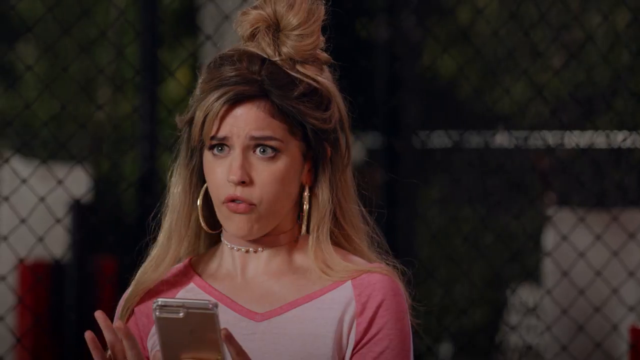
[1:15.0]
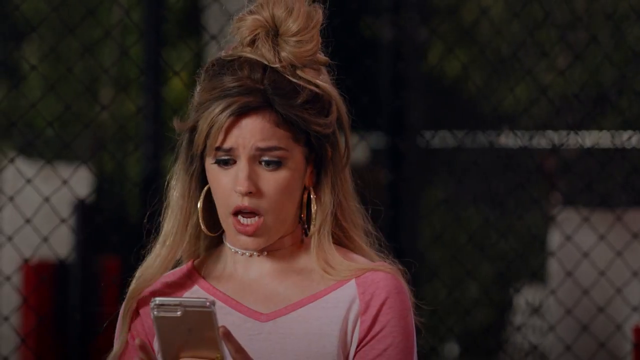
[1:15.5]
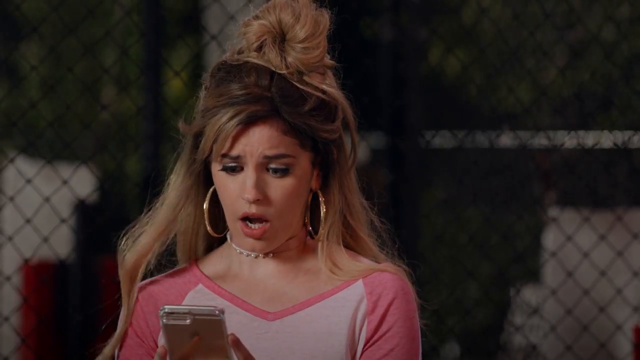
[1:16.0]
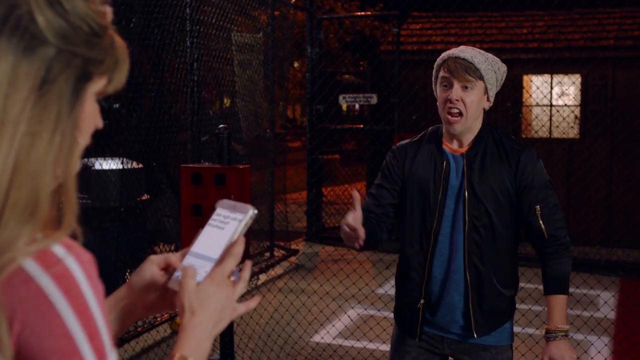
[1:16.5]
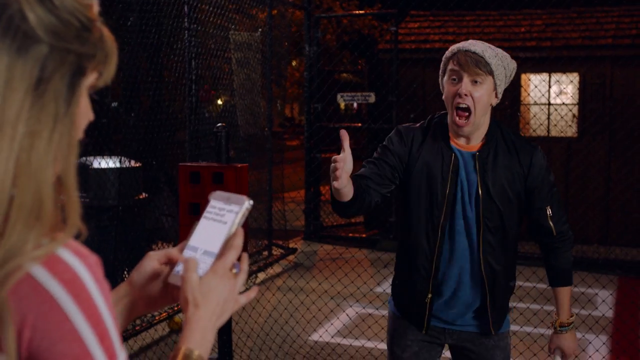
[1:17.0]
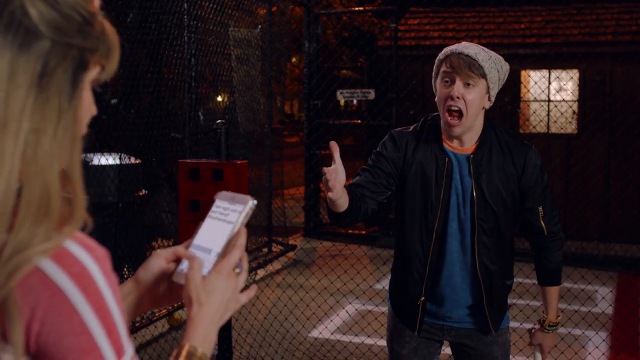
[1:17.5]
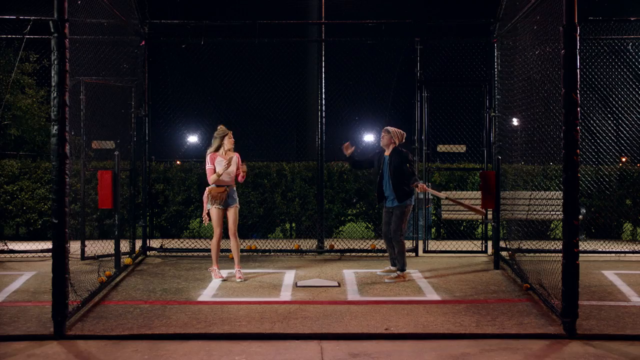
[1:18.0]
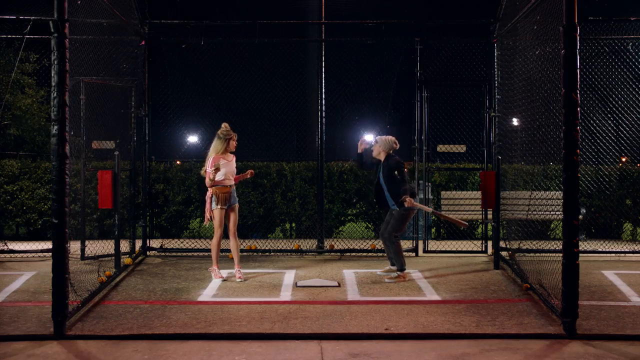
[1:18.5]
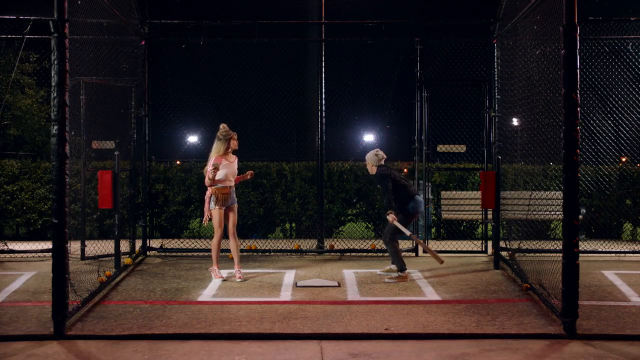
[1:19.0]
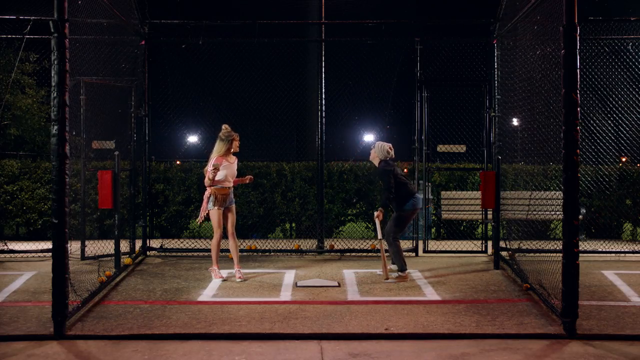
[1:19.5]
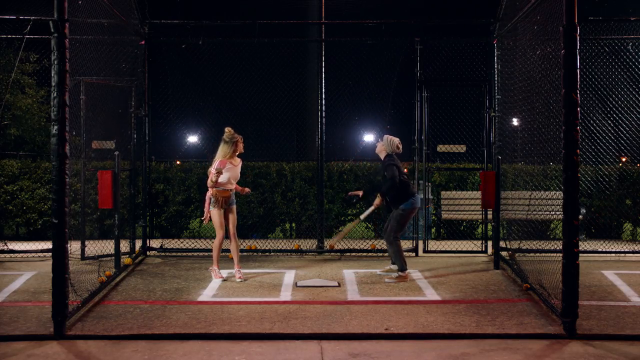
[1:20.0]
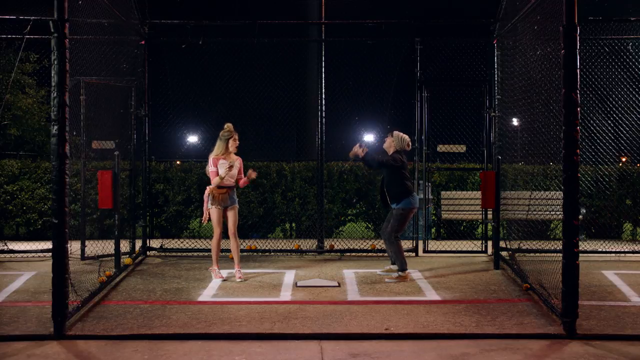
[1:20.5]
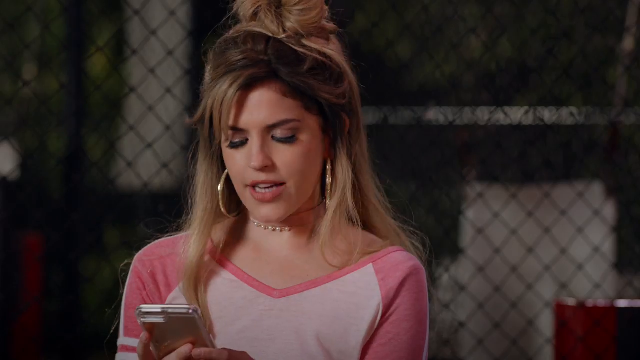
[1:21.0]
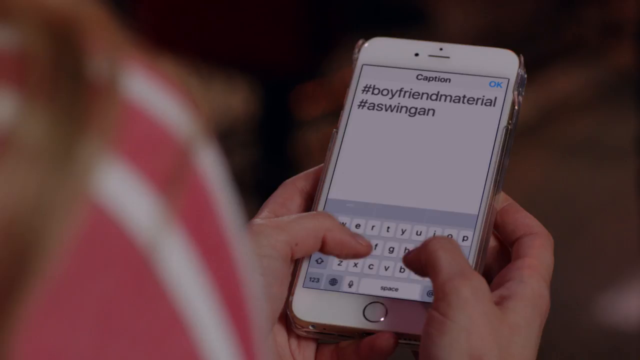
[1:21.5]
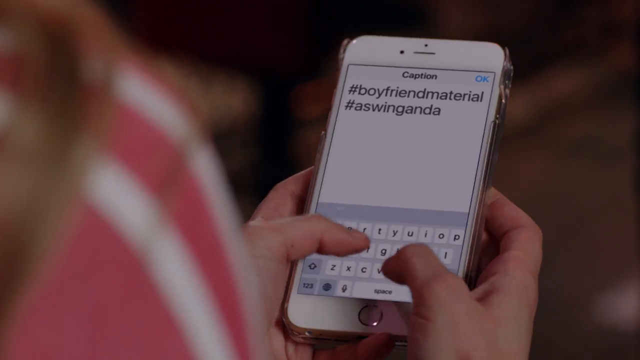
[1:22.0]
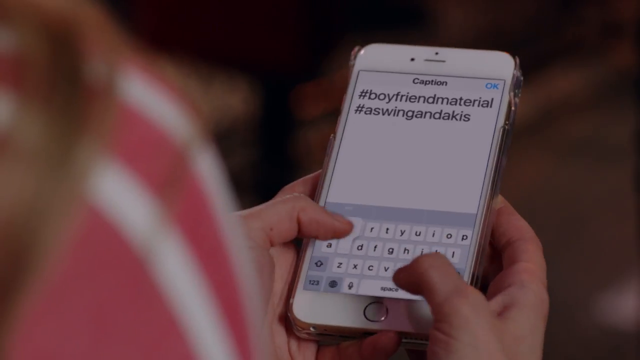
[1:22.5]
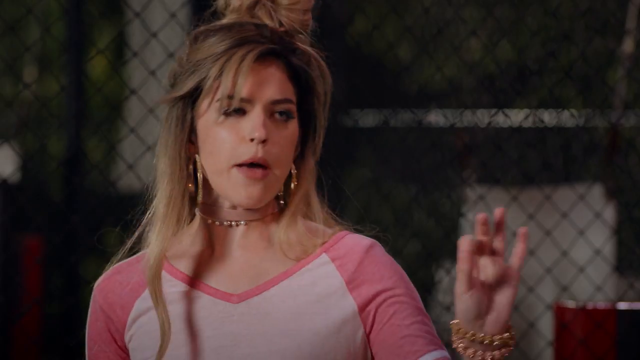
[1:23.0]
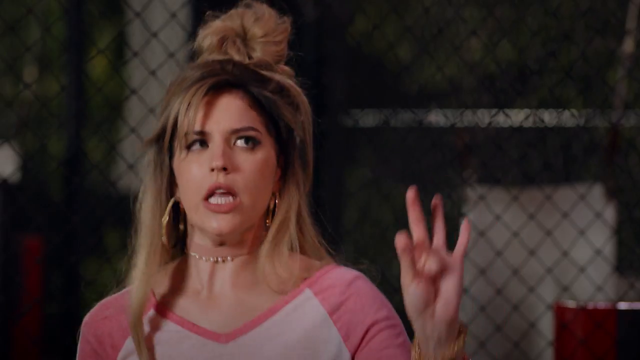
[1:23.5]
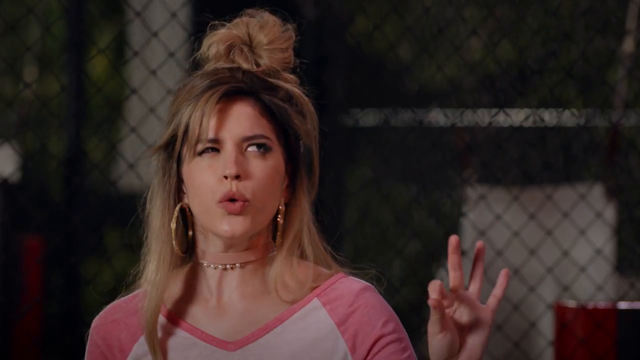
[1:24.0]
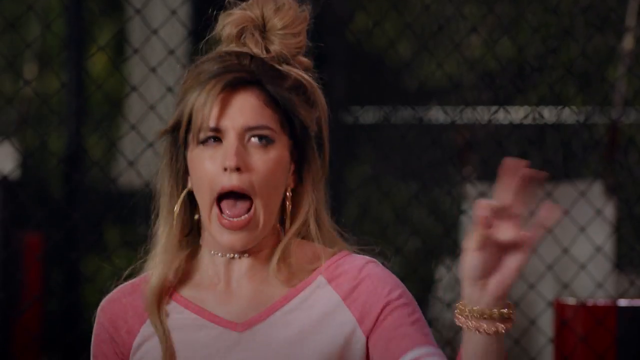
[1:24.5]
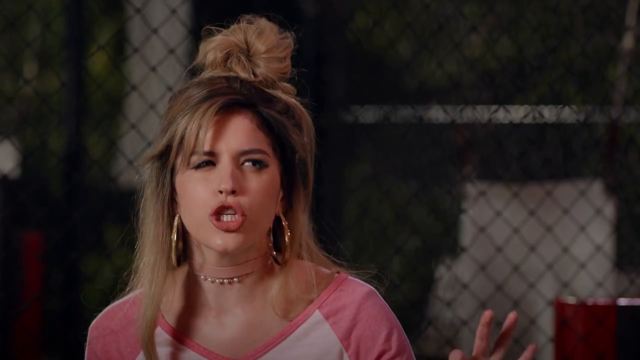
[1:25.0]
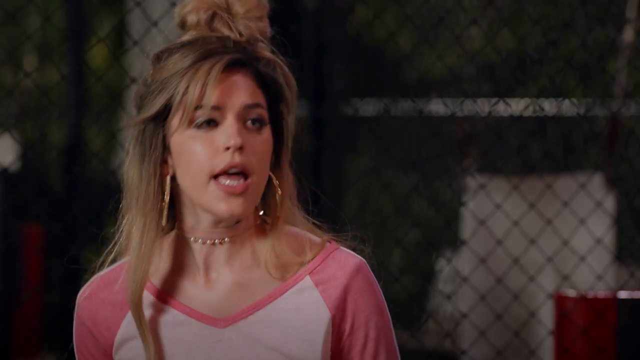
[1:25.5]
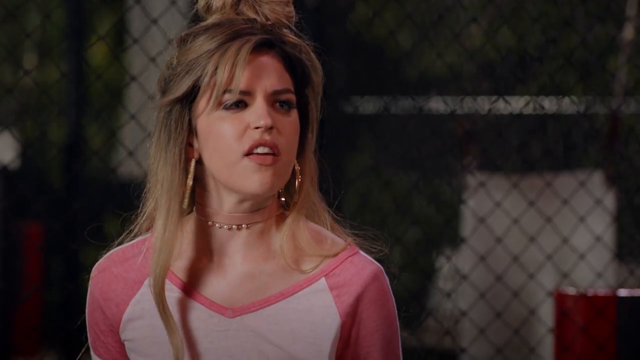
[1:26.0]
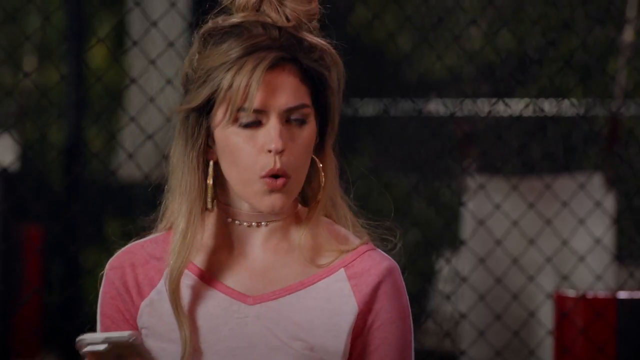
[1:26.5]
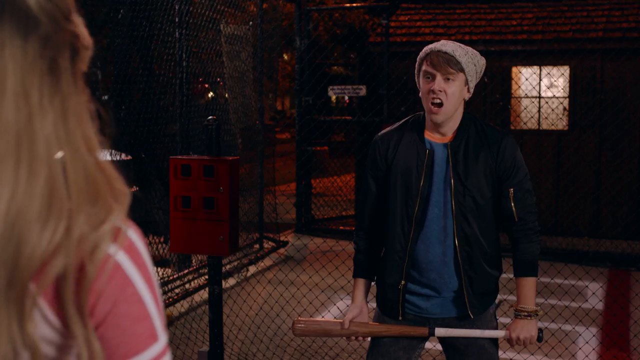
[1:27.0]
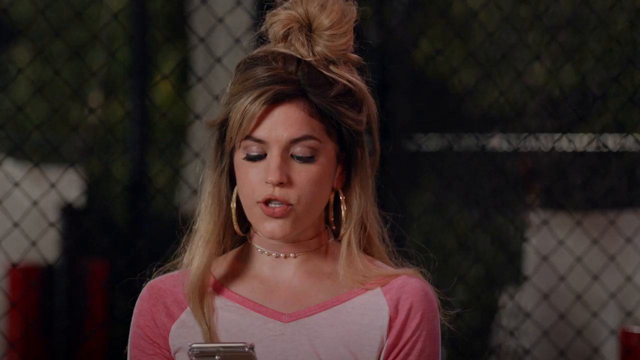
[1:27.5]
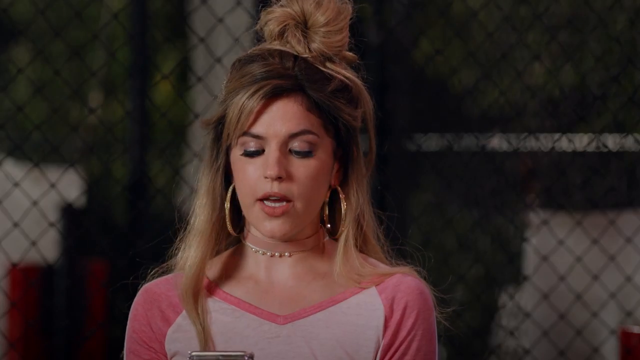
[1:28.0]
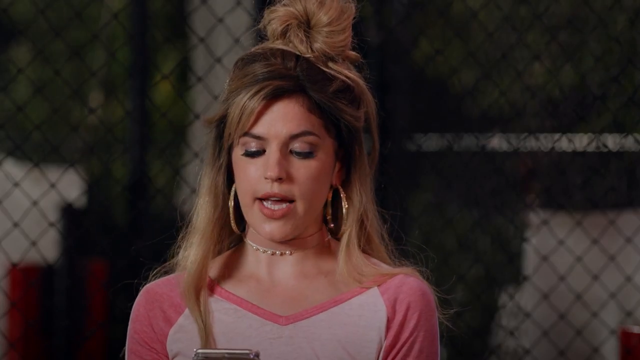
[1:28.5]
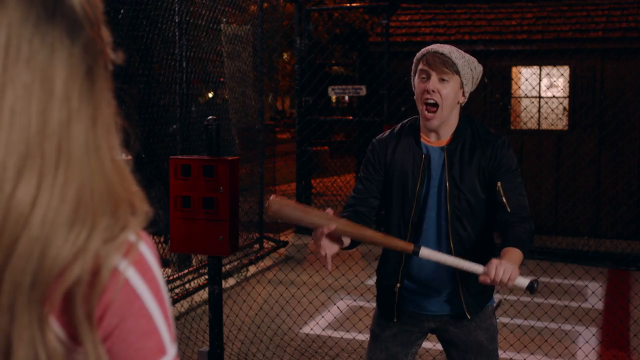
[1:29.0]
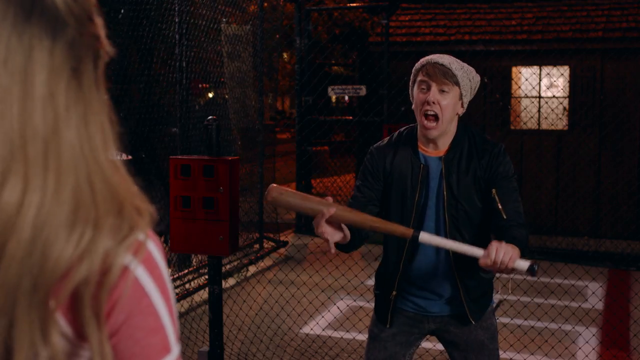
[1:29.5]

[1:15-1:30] A woman with blonde hair, big hoop earrings, a necklace and a sort of pink and white sporty baseball-jersey-type top looks at her phone and seems upset about something. The camera cuts to a man in front of a chain-link fence, with a building in the background that has an illuminated window; it appears to be night. He wears a black bomber jacket, a blue t-shirt with an orange ring collar and a gray winter cap, and he shouts at the woman, seeming very upset. The camera pans back to a wide shot: he is in the batter's box and she is on the other side of the plate. The batting cage is outdoors, with black chain-link mesh, a row of hedges and a park bench behind them, and it is night. The man shouts at the woman and she yells back. Holding a baseball bat, he pulls it over his head, seeming exasperated. A close-up shows her phone screen as she types; it says something like "#boyfriend material", and she types some other things. She then seems to be scolding him for something. The shot cuts to him holding the bat, very upset and seemingly frustrated and exasperated with her.